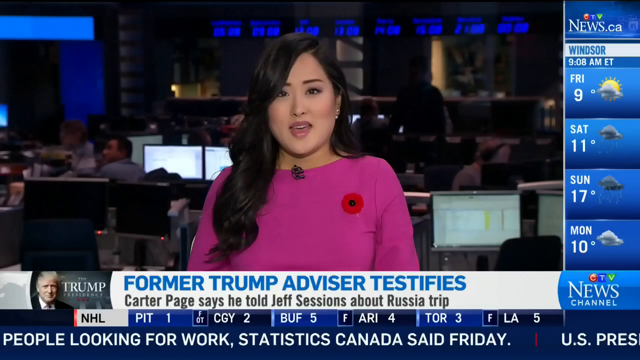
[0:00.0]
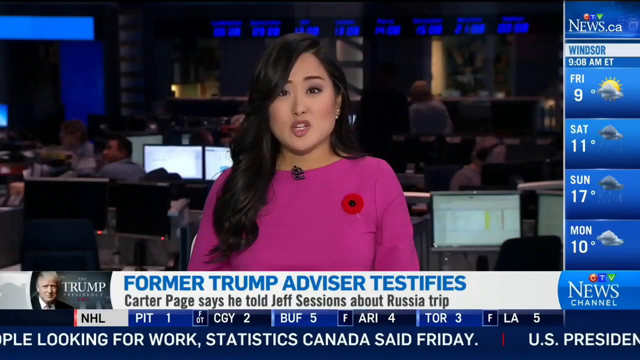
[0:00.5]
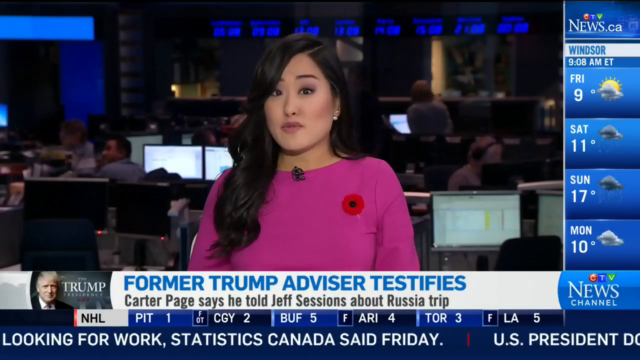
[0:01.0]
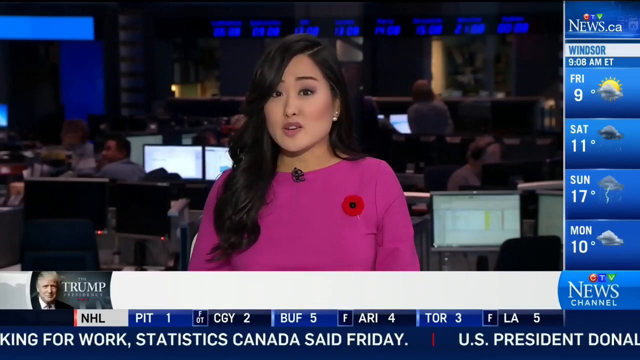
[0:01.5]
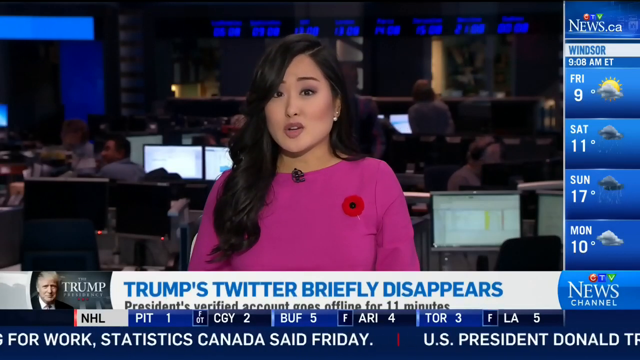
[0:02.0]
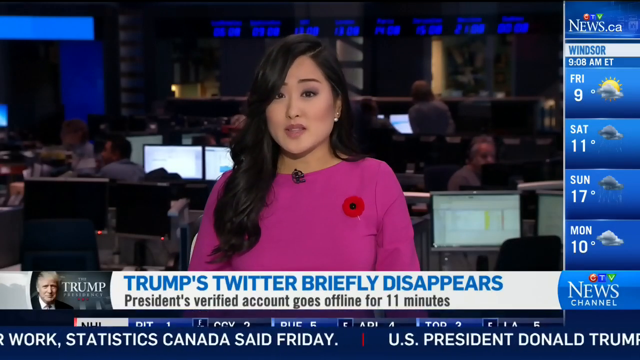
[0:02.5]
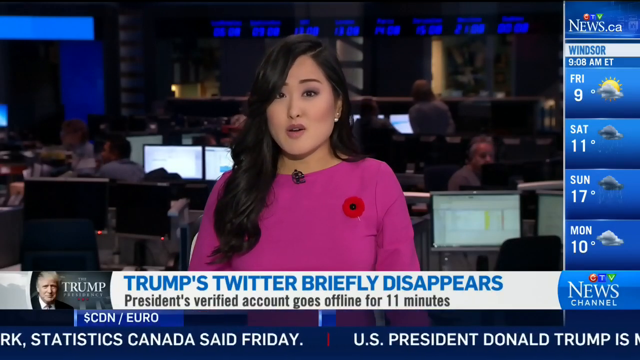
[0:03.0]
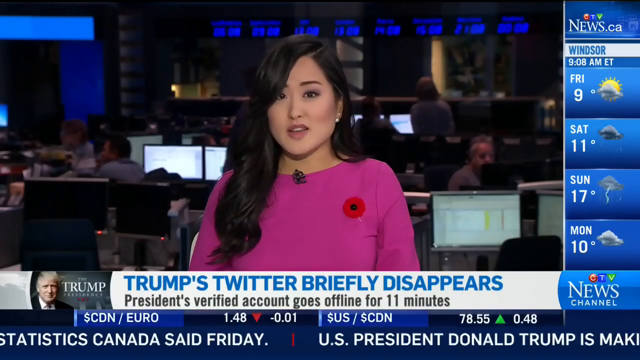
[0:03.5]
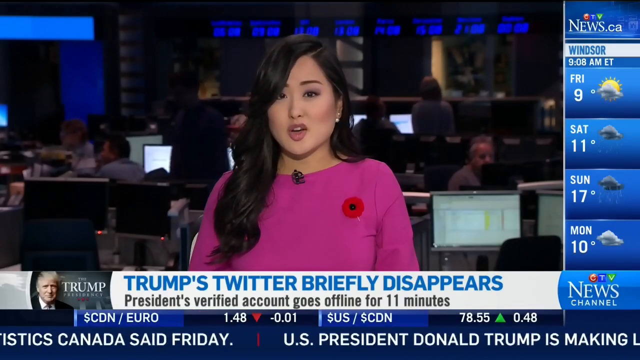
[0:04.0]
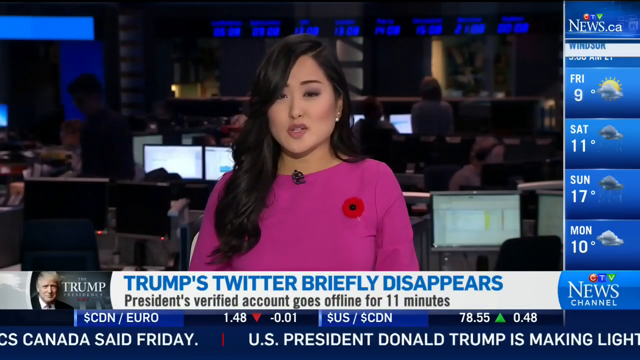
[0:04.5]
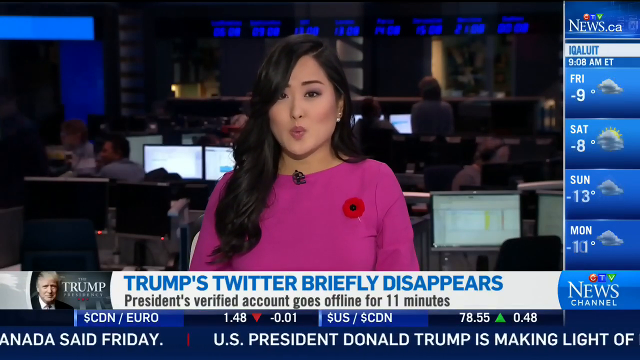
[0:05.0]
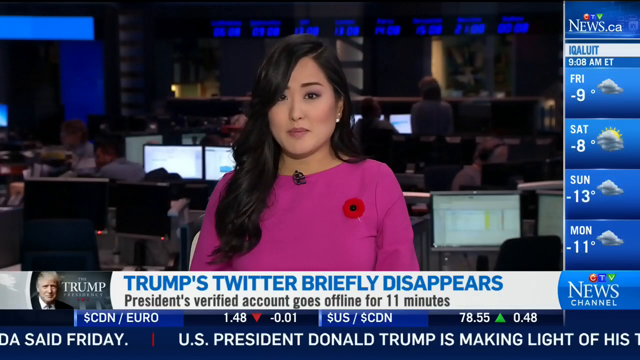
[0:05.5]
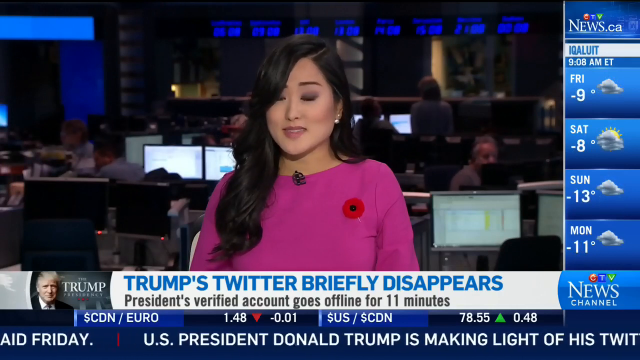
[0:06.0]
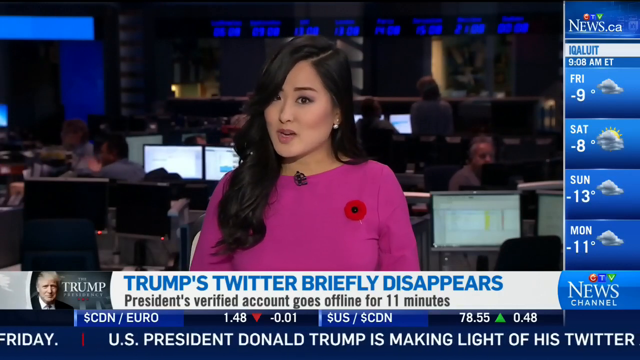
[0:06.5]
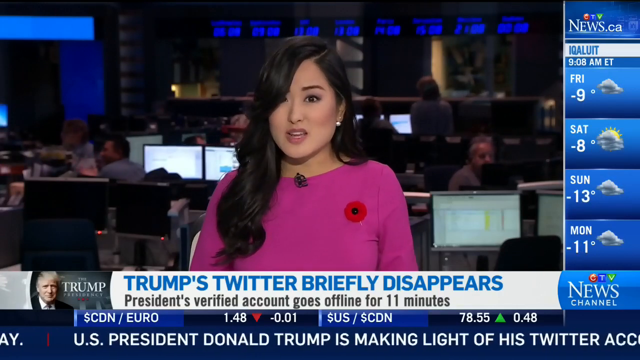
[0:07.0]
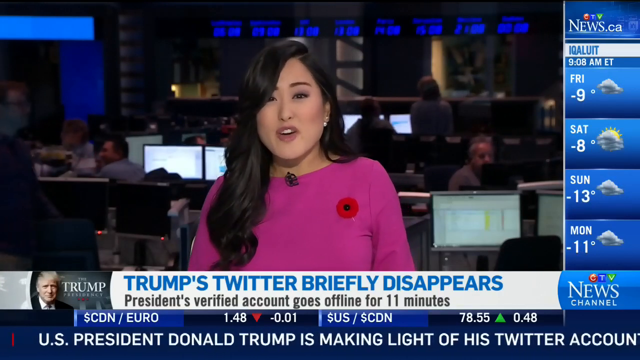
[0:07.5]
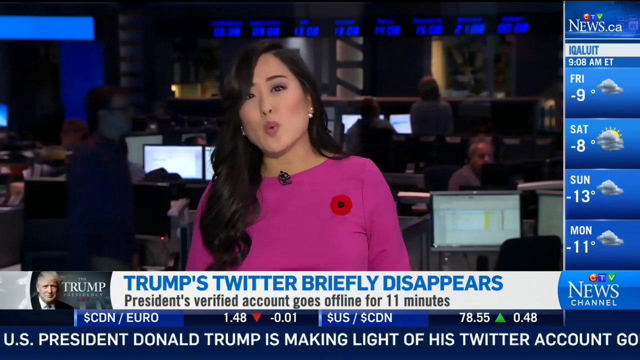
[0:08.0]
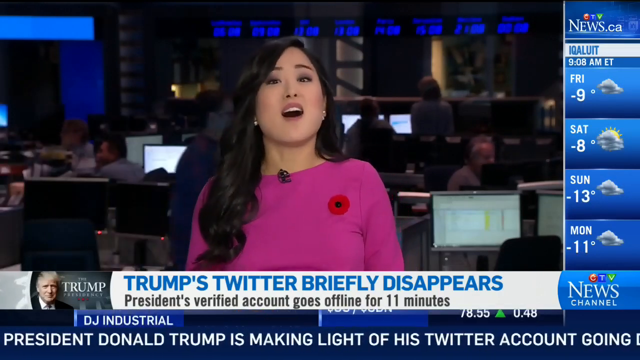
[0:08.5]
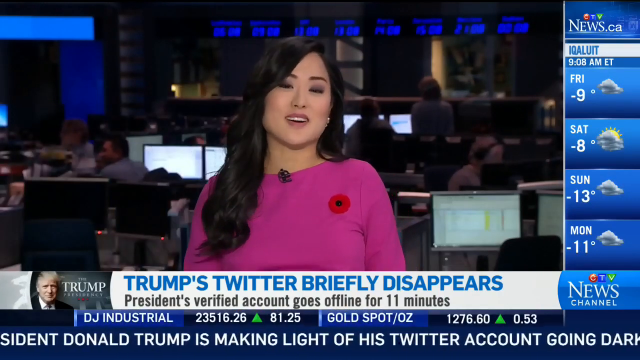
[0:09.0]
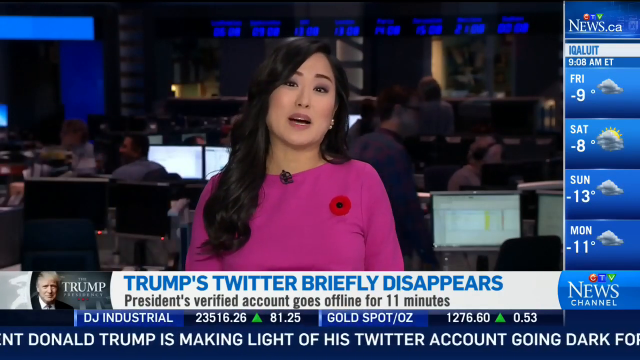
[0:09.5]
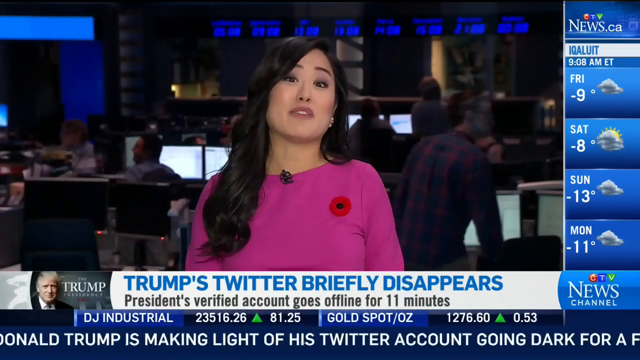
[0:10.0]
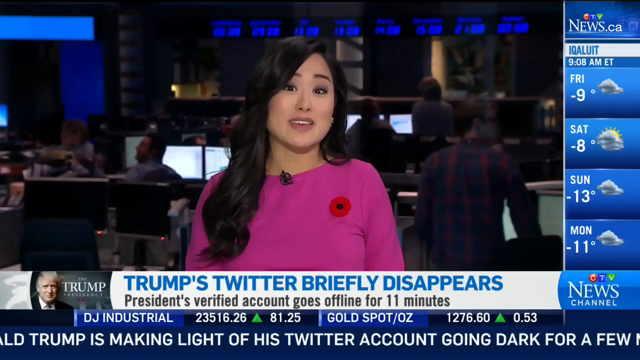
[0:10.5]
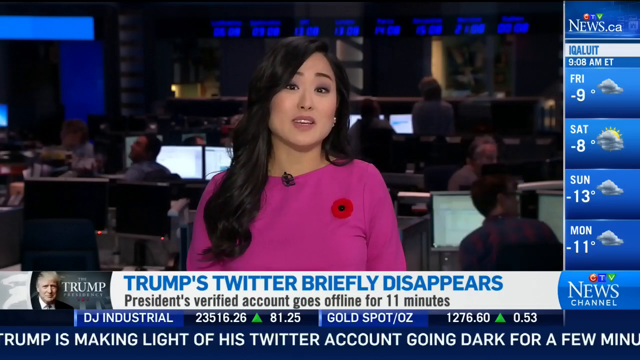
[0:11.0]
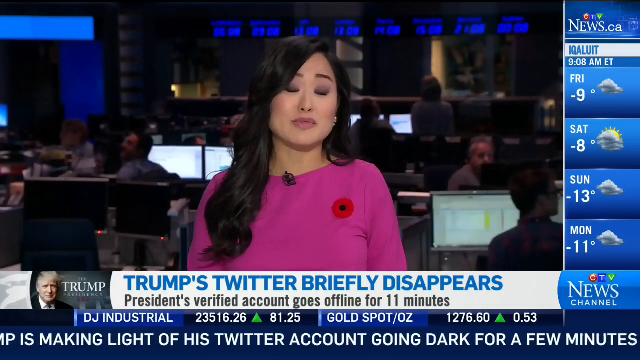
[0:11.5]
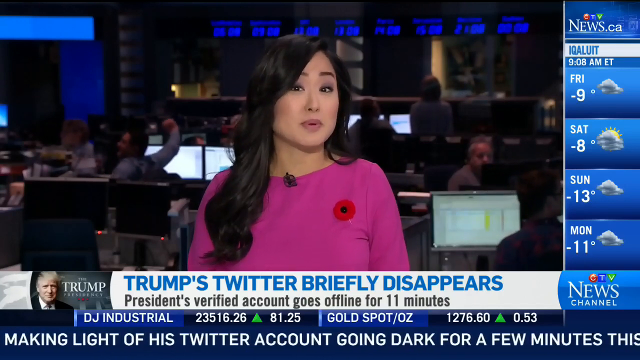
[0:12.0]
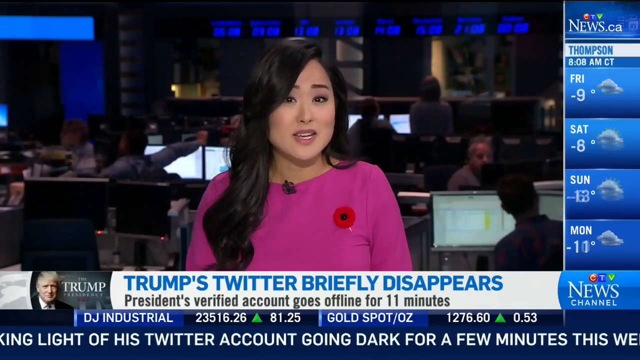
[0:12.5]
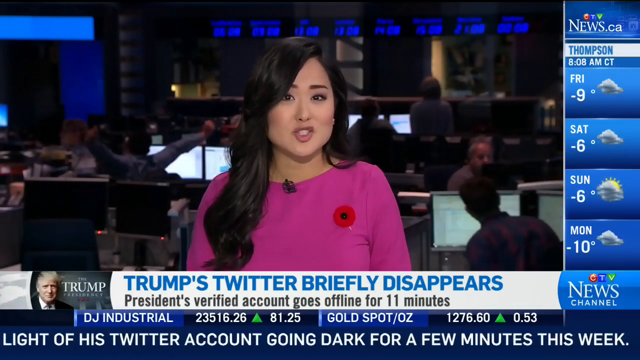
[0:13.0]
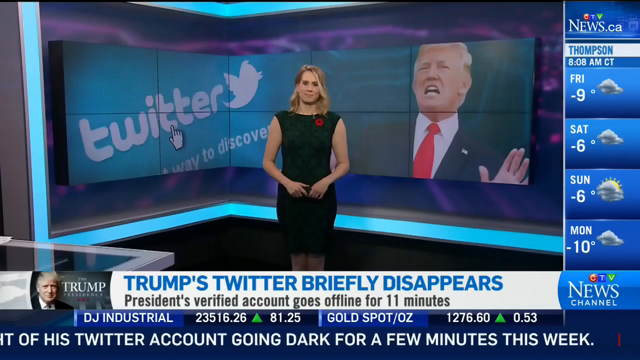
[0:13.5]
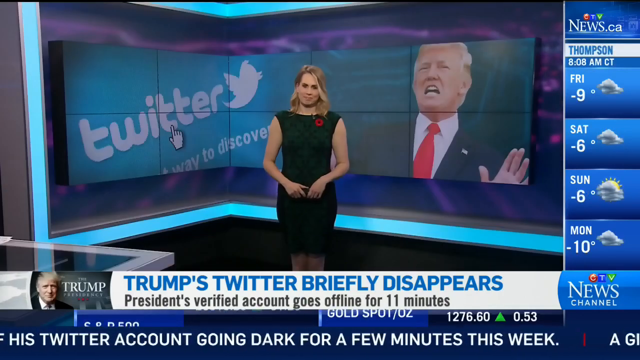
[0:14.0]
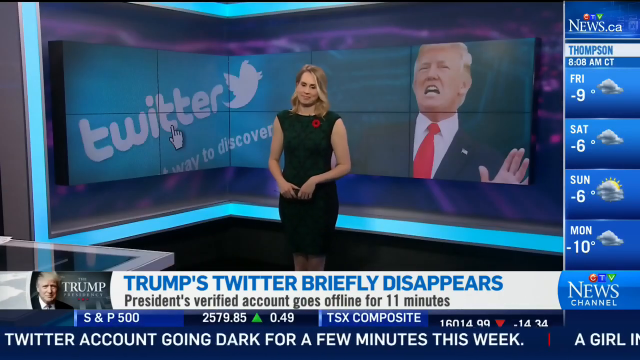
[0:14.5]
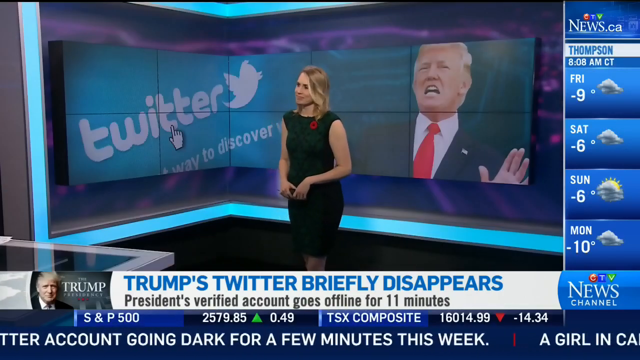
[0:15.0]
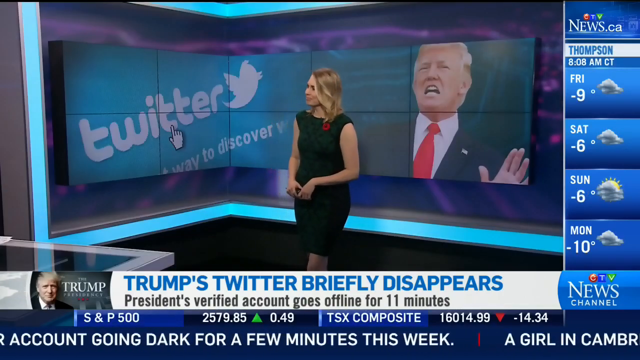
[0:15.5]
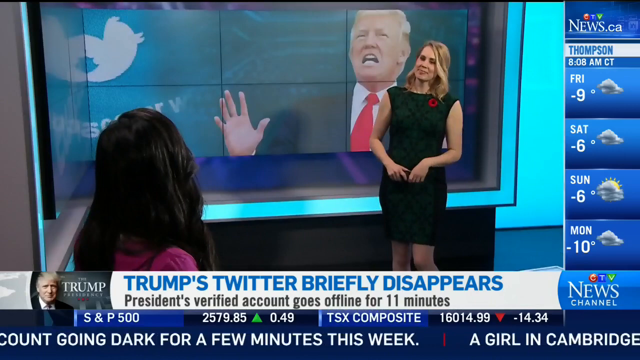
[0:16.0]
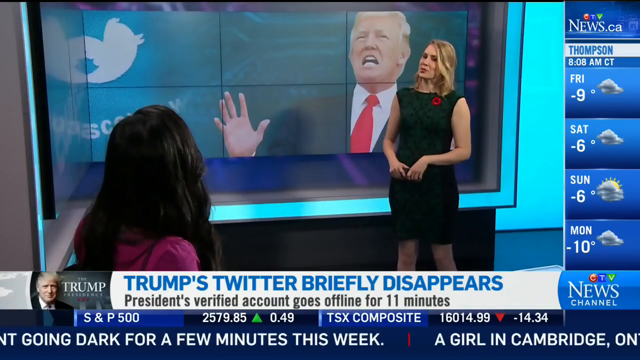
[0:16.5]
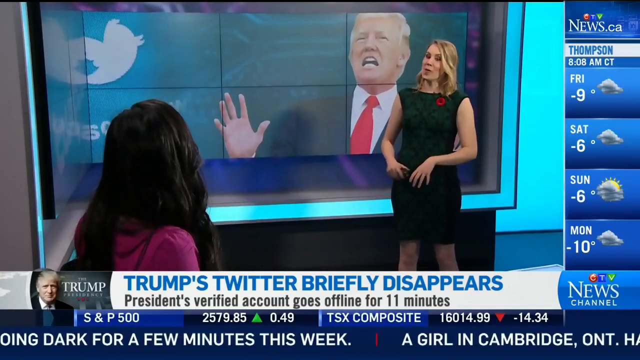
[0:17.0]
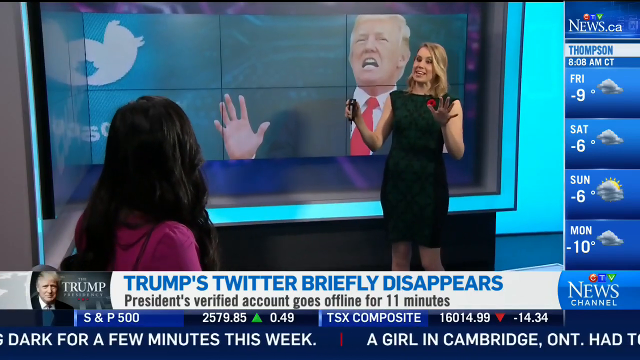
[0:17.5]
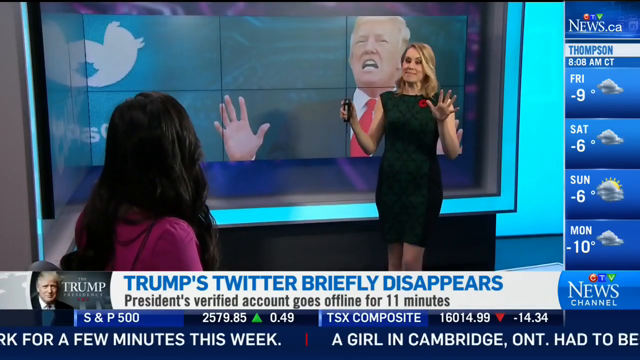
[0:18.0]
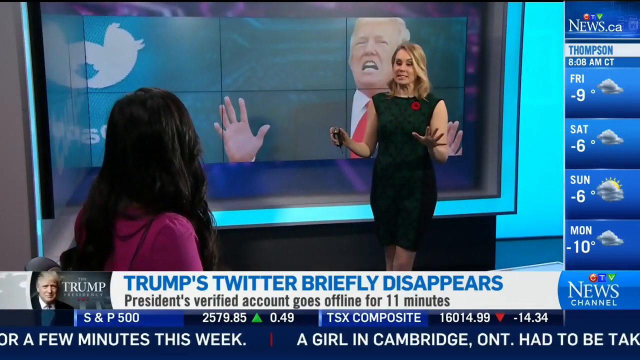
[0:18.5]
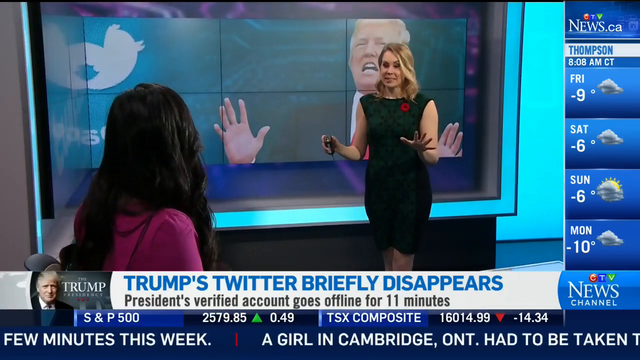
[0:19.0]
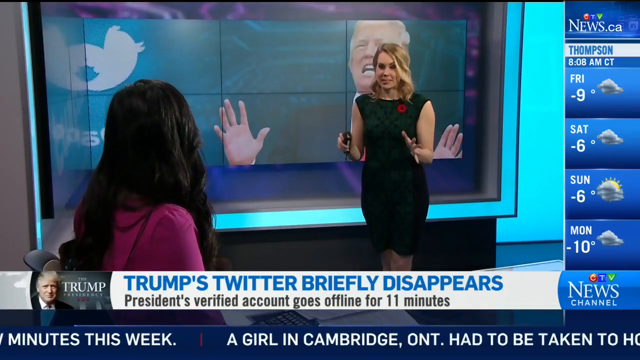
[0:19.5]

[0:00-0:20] A young woman news reporter who looks to be of Asian descent opens the video. She has long, dark, somewhat wavy hair, roughly bra length; part of it hangs over the front of her shirt, and the rest is probably hanging down her back. She appears to be around 30. She is sitting in a newsroom full of people at desks with laptops, with a lot of blue lighting around the room. A few people seem to be looking around; the others are not clearly visible, but some of them are clearly active. A headline at the bottom of the screen reads "former Trump advisor testifies," and another page says "he told Jeff Sessions about a Russia trip." A picture of President Donald Trump is in the bottom left corner. Beneath the caption are scores, apparently from hockey games, with "NHL" not far from Trump's picture: Pittsburgh (apparently) 1, CGUI 2, Buffalo 5, Arizona 4, Toronto 3, LA 5. A long column on the right side shows "news.ca" and "Windsor" with a weather report: a time of nine or eight in the morning Eastern time, and temperatures for Friday, Saturday, Sunday and Monday ranging from 9 to 17 degrees, with most days cloudy. Below that is a "CTV News Channel" logo. A crawl at the bottom of the screen mentions Donald Trump making light of his Twitter account going dark for a few minutes this week. The video then cuts to another young woman standing in a news-platform-type room, with a picture of Donald Trump on a large display behind her, along with the old Twitter box and logo.